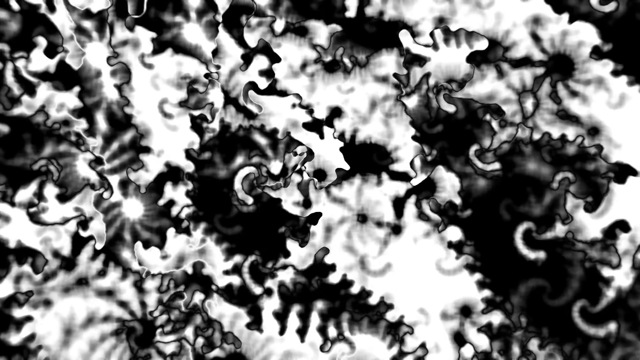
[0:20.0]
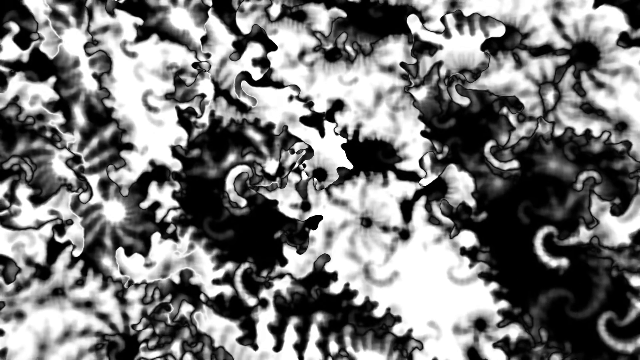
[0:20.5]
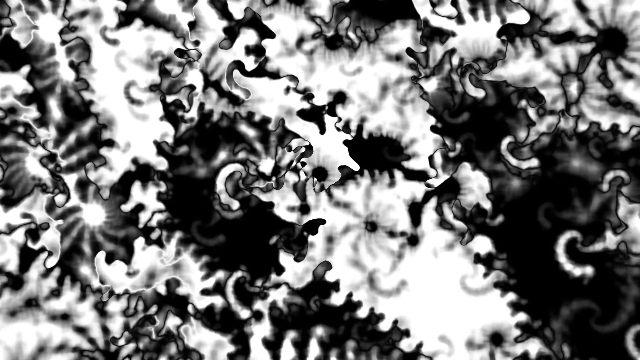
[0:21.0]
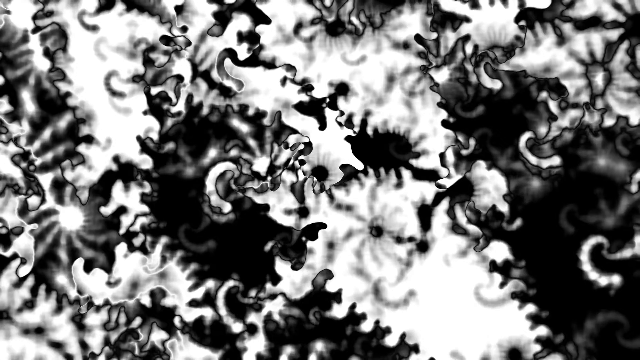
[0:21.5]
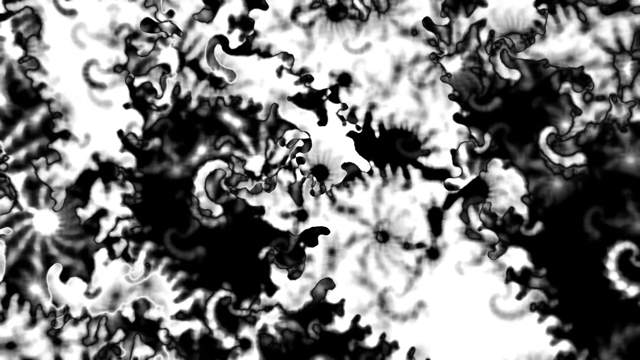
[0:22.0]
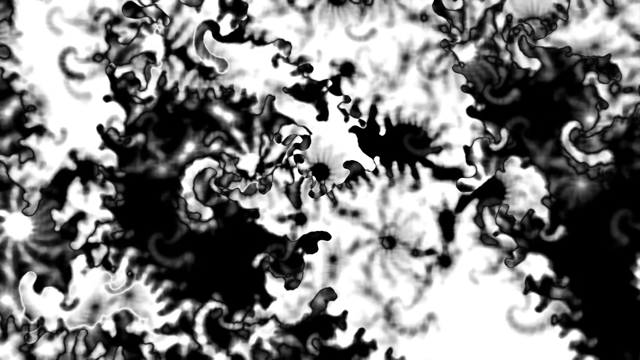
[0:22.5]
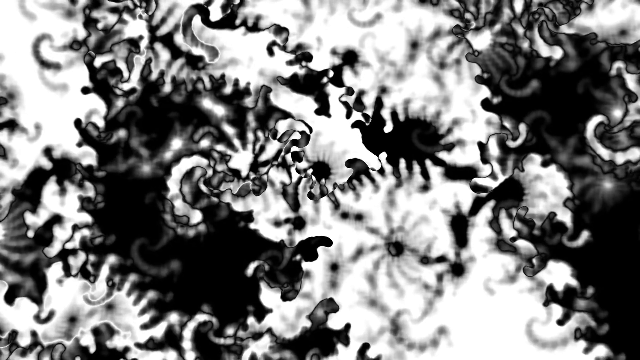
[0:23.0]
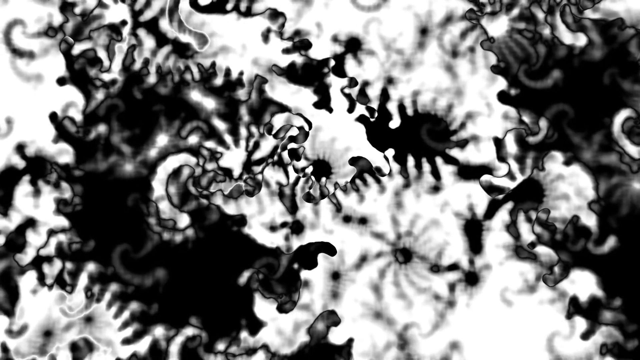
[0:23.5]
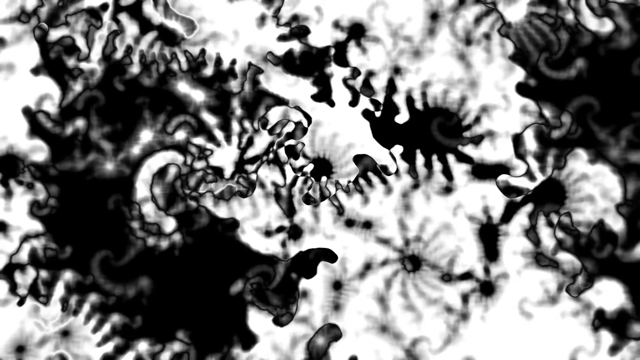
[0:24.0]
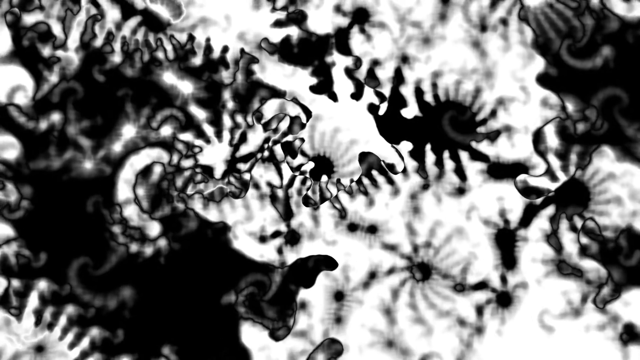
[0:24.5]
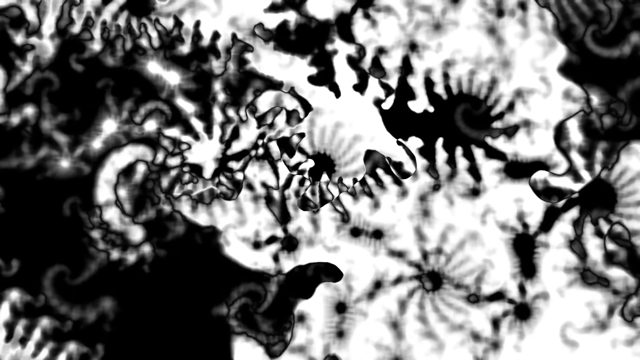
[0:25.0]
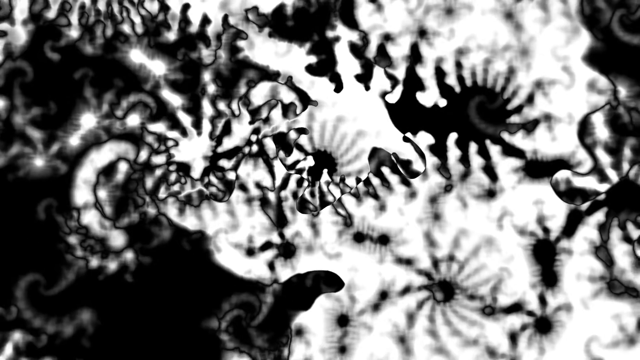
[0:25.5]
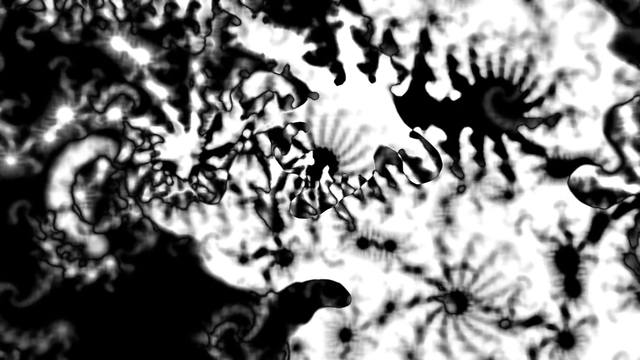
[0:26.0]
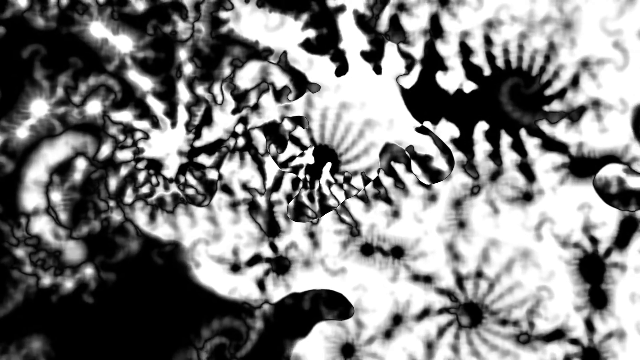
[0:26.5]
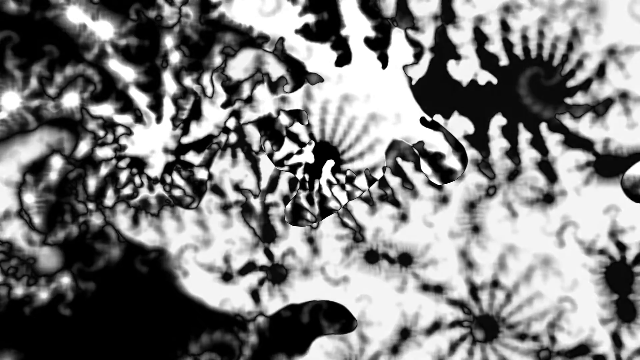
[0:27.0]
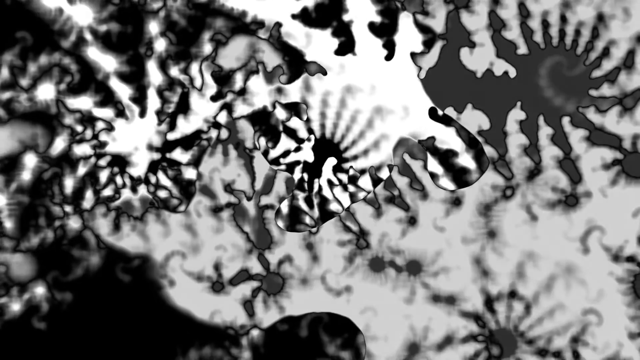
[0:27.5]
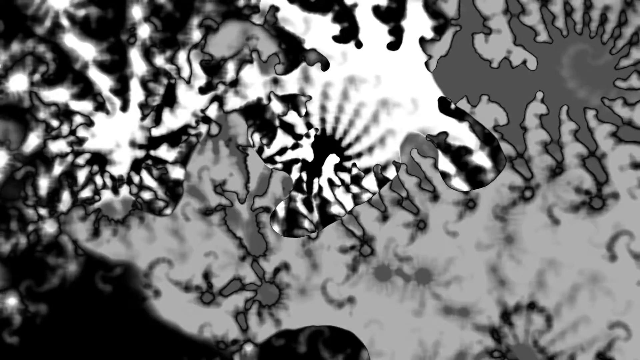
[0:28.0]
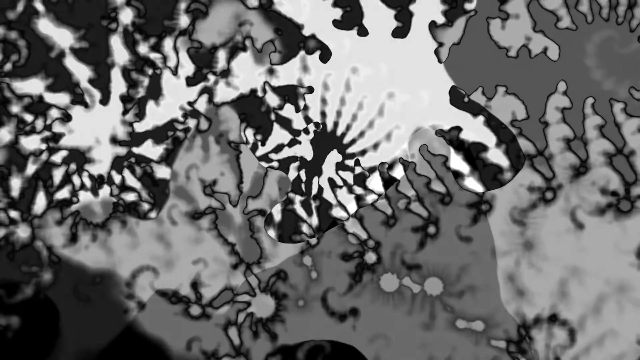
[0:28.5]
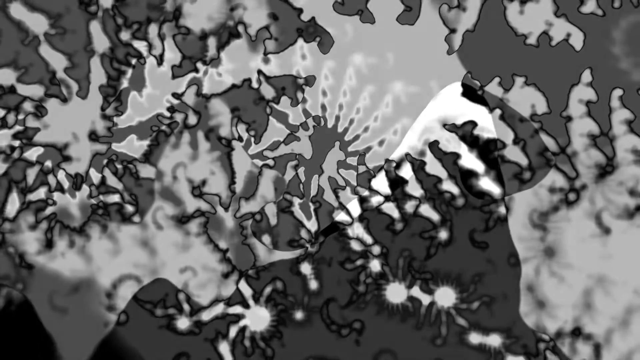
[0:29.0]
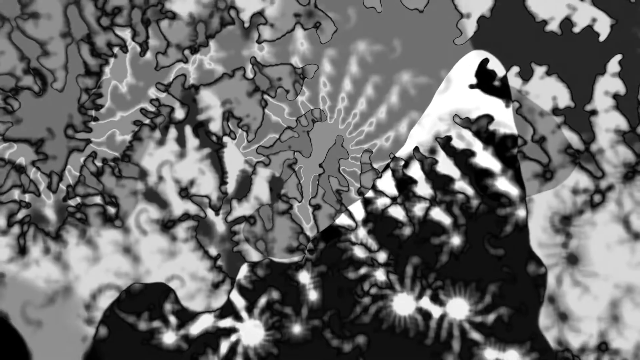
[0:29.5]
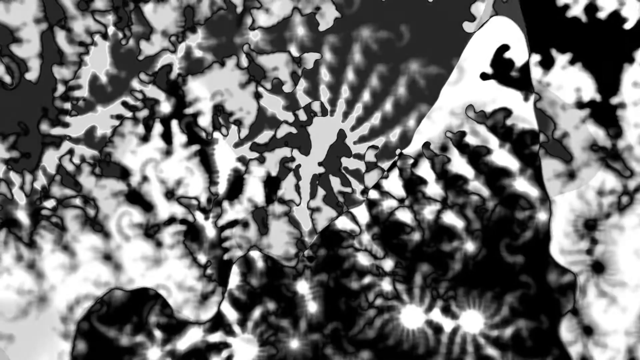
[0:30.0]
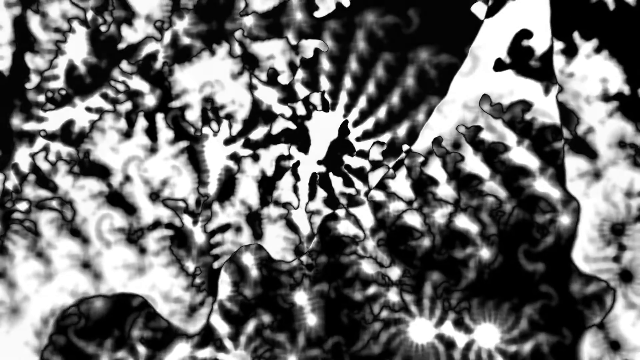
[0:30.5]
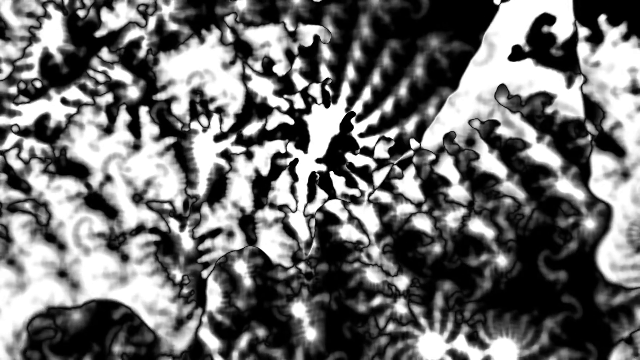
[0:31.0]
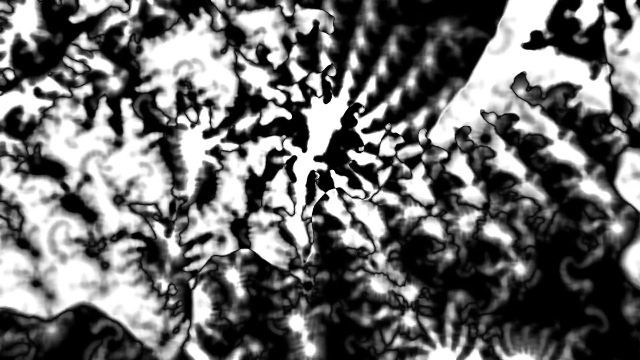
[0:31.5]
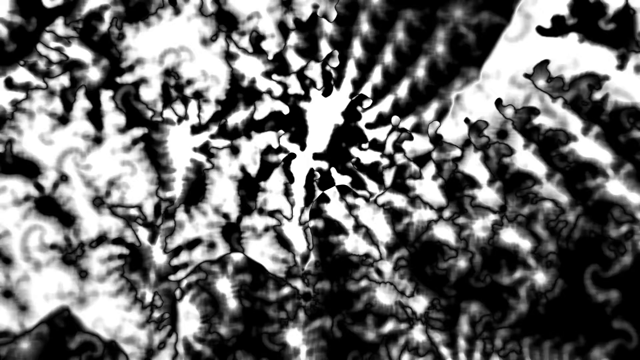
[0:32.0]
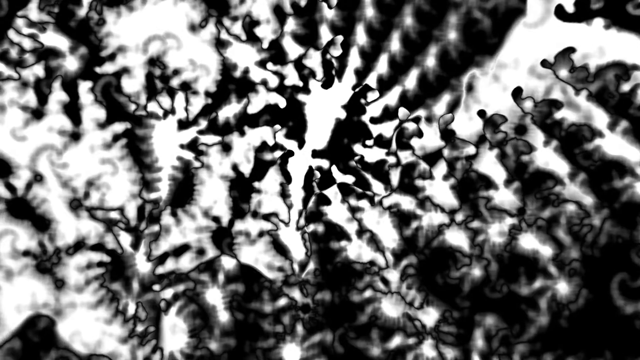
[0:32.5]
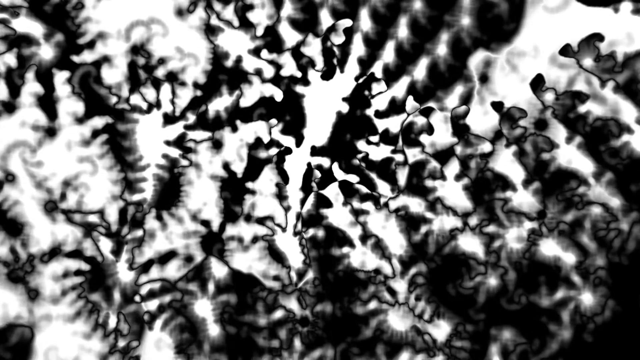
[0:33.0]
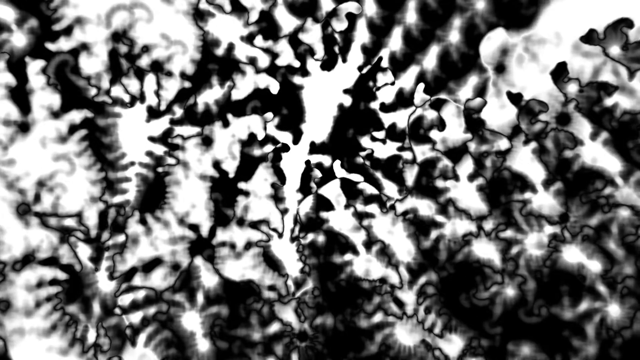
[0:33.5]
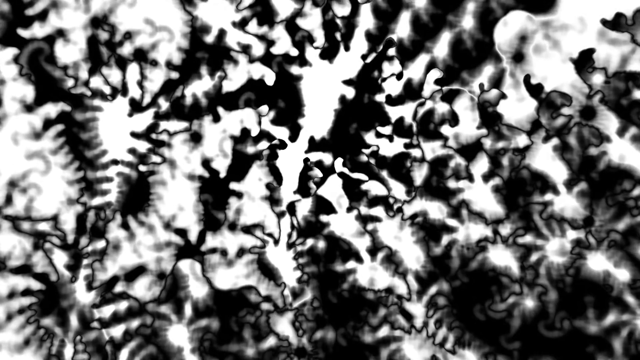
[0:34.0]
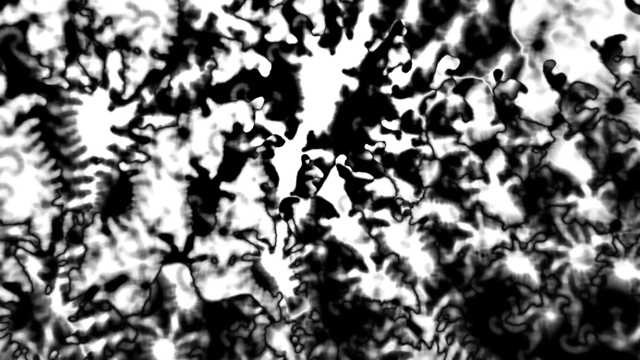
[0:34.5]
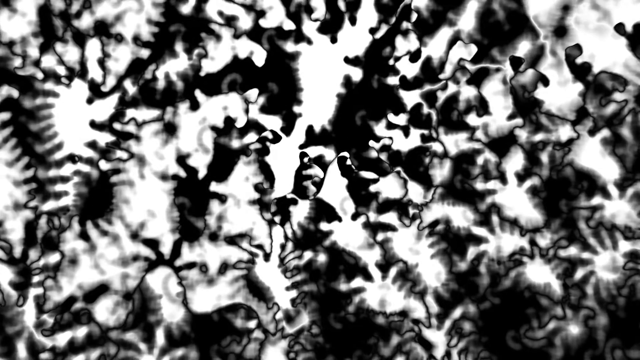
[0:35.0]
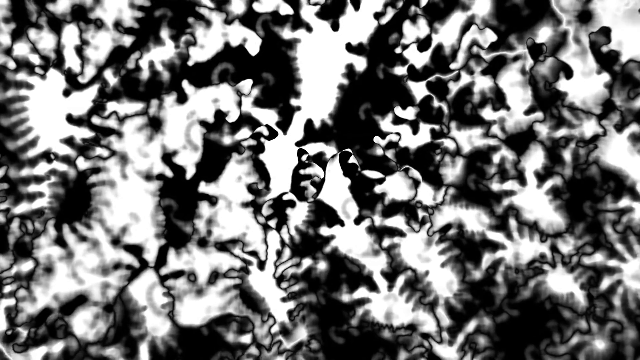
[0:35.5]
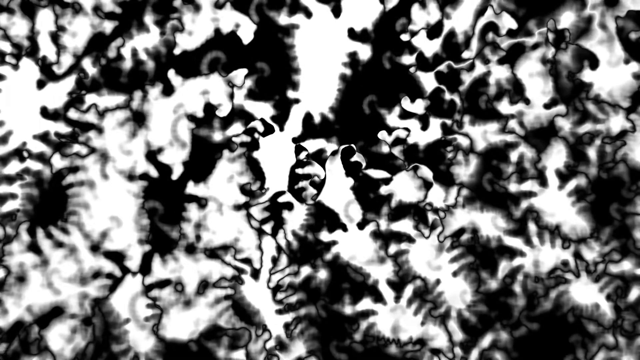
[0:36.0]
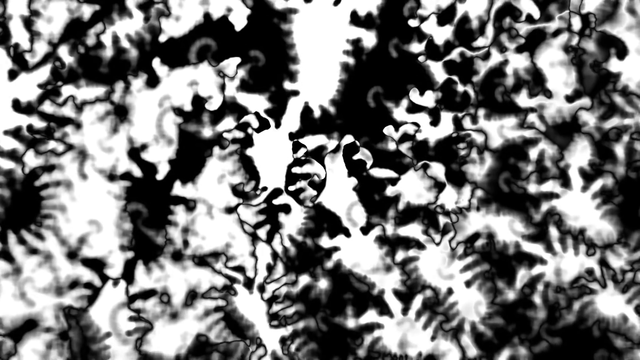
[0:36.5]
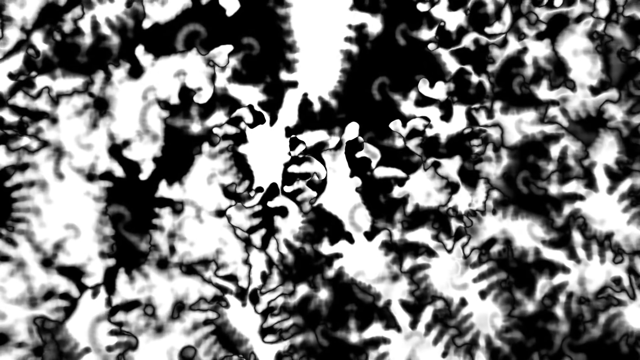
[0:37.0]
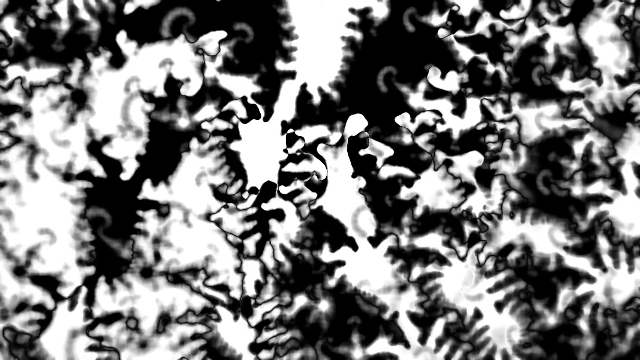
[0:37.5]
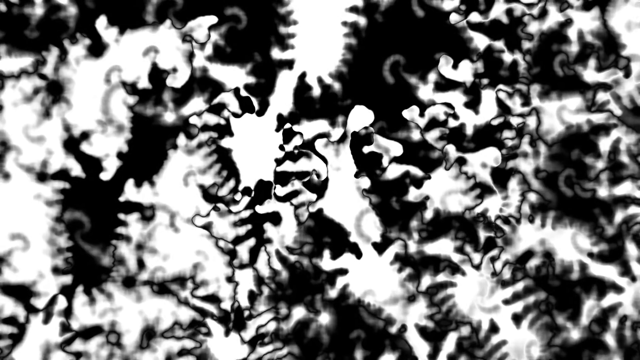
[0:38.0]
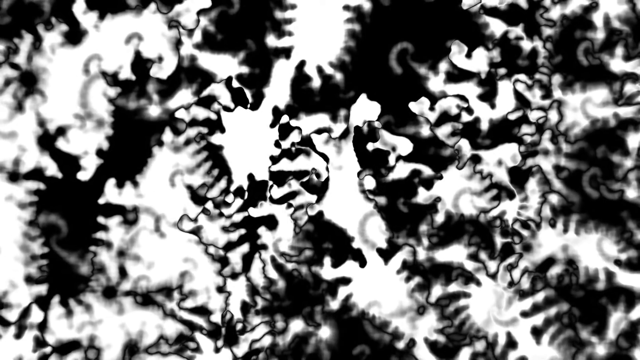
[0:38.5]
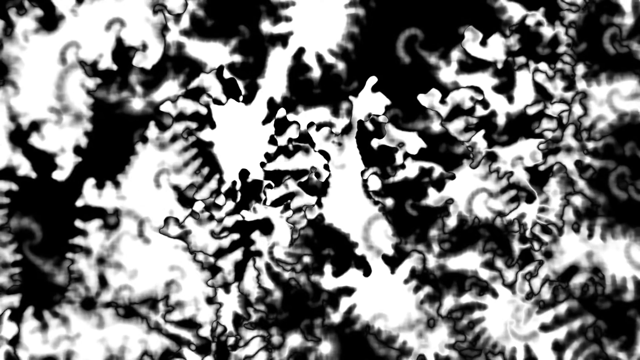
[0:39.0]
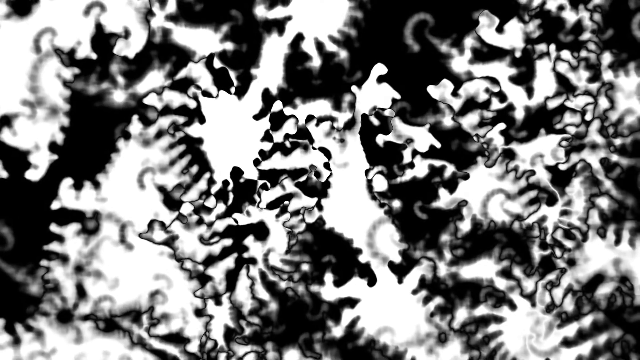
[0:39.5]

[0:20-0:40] The view seems to keep zooming in, and the many things in the frame change color and shape, growing from small to larger as the zoom continues.